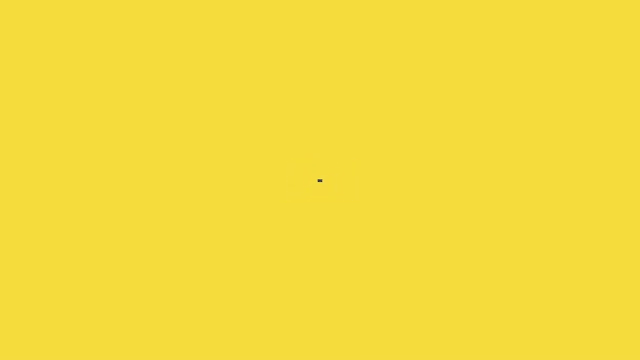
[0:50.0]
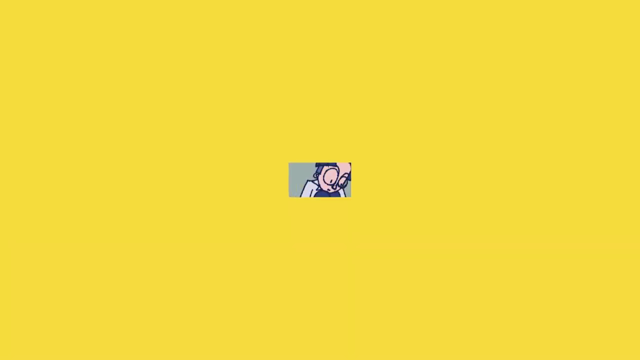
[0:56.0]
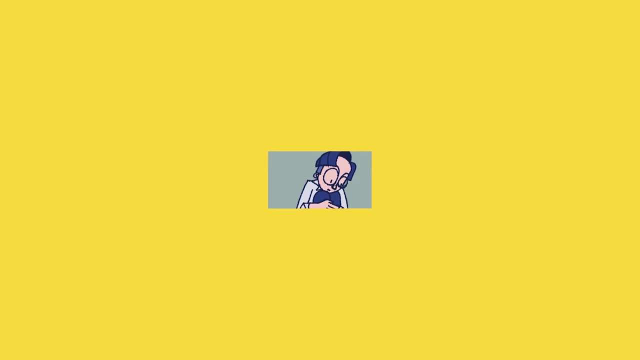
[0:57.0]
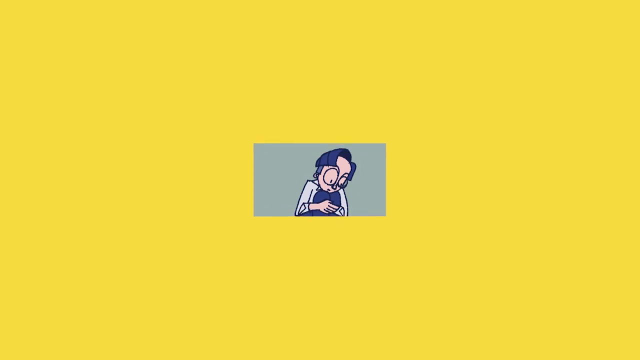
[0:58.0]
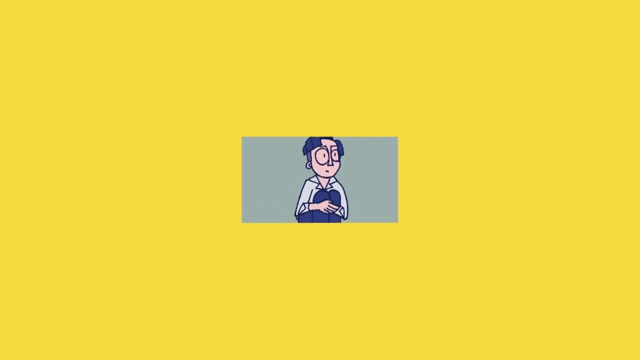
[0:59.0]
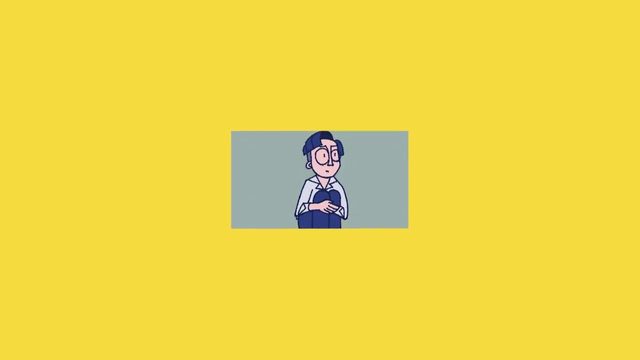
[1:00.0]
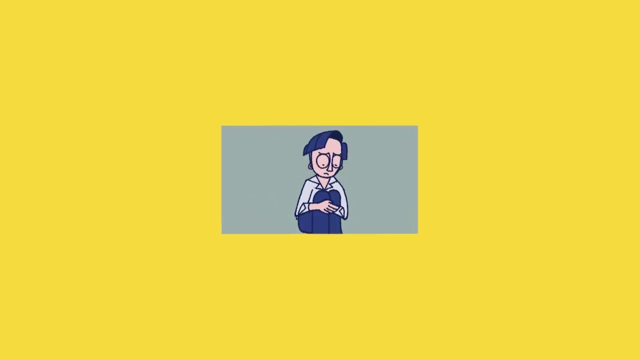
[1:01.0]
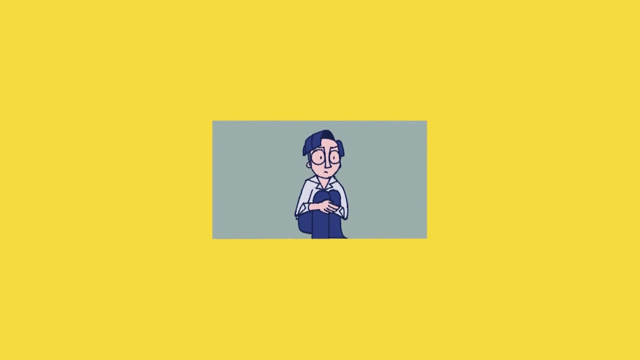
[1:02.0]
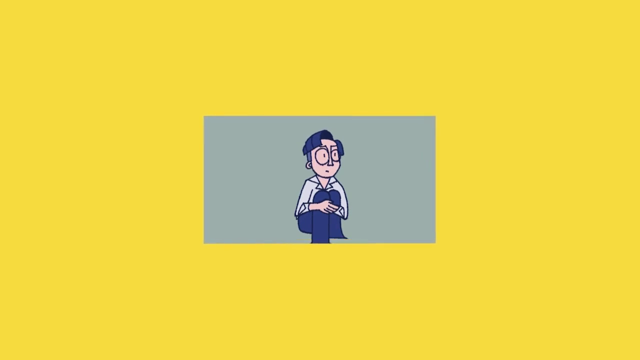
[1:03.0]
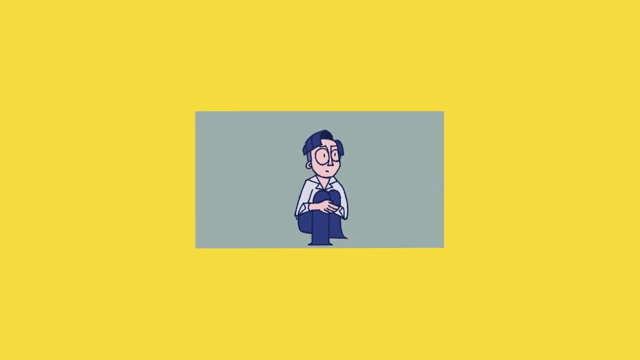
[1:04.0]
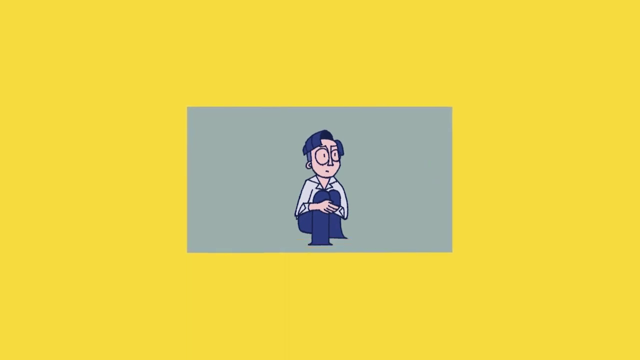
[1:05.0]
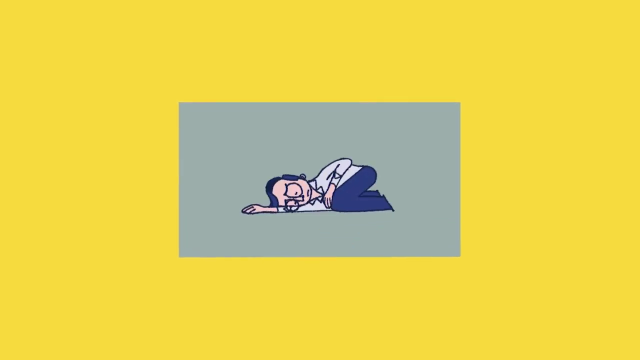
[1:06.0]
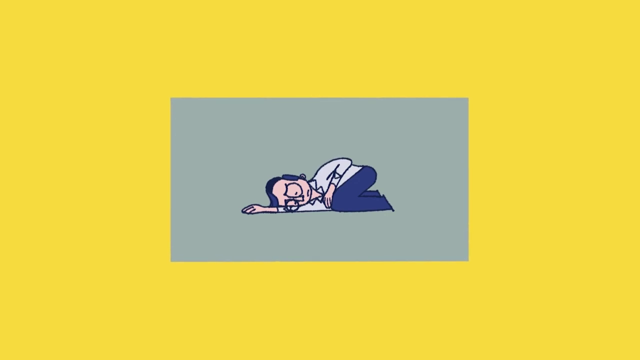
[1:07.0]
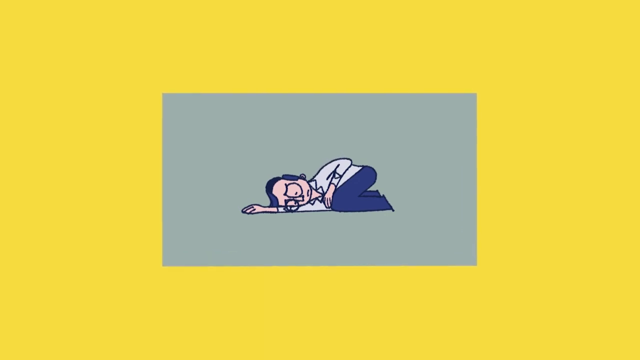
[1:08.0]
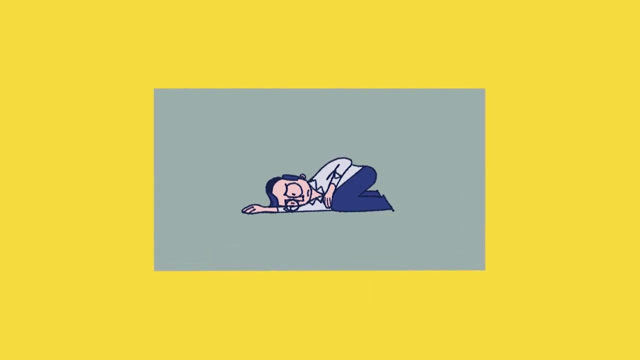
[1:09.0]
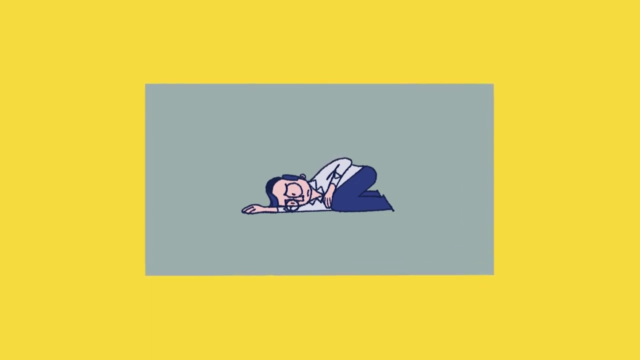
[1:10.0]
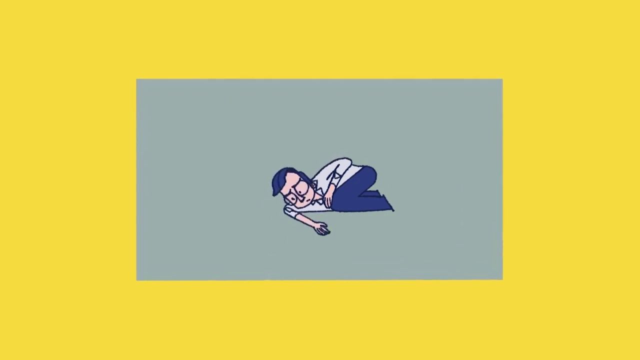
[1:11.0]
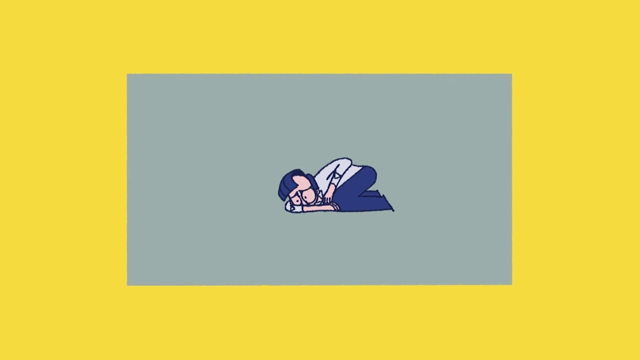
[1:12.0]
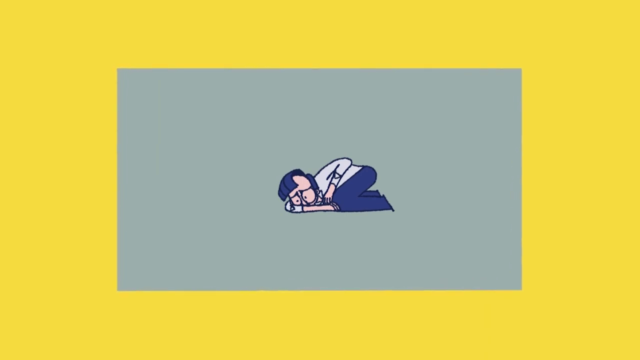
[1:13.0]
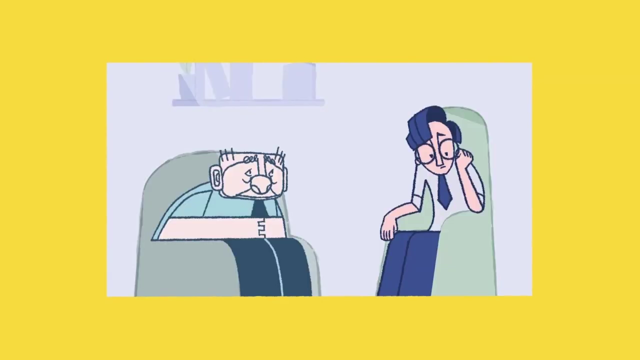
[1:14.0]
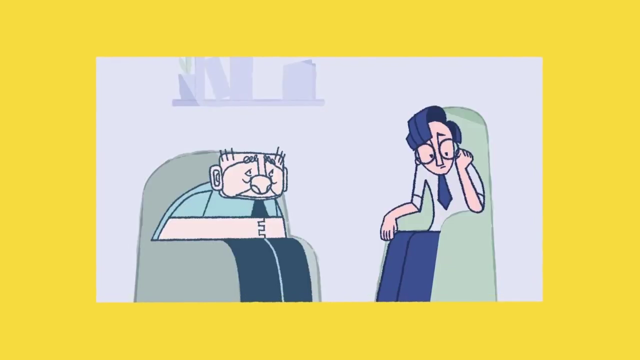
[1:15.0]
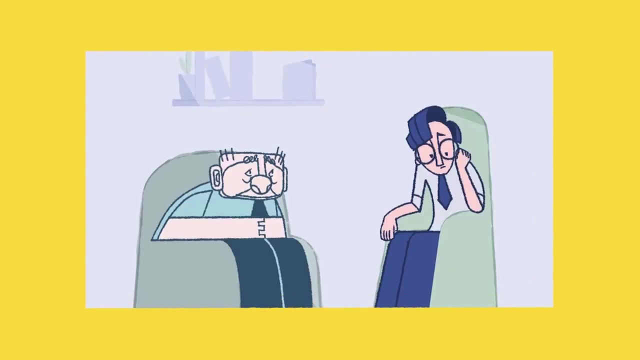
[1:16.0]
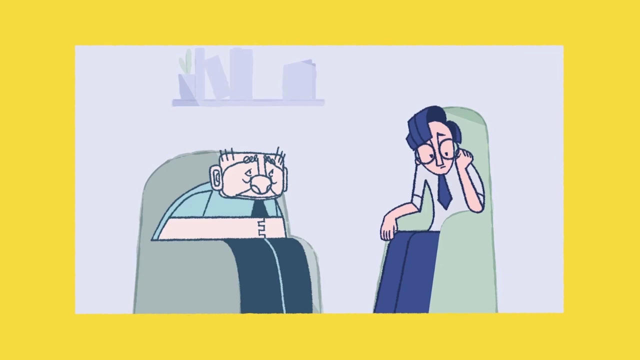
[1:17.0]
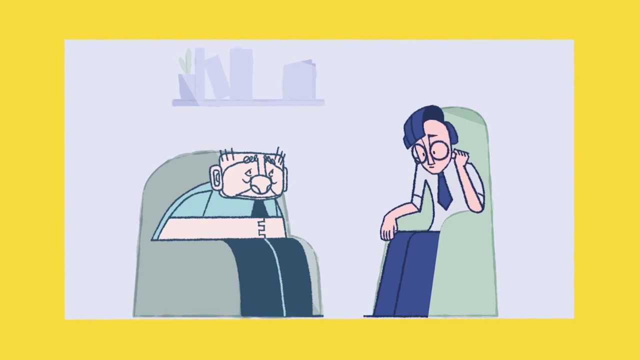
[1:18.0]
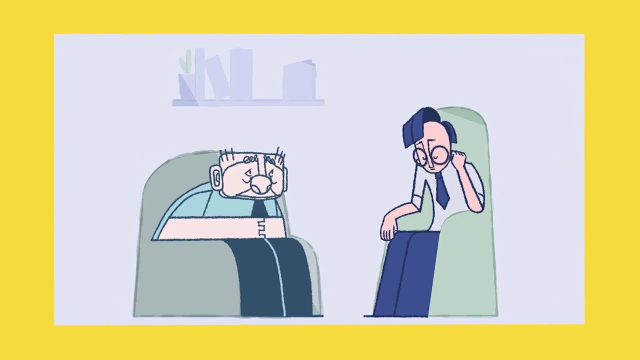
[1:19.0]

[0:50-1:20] The solid yellow background slowly fades away as the central point zooms back out, revealing the anxious main character in the centre of the screen, sitting on the floor with his knees pulled up to his chin and chest and his arms wrapped tightly around his knees. He then moves into the fetal position, lying on the floor as if sleeping. He wakes up and brings his arm around himself to hold onto himself. Throughout this, the yellow background gets smaller as the central square frame around the character gets bigger. Then he is shown sitting in an armchair, looking down, across from what appears to be a therapist: a much older man, also sitting in an armchair, looking across at him with his arms on his lap.